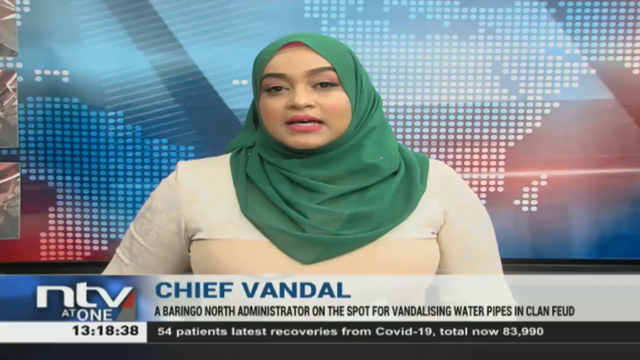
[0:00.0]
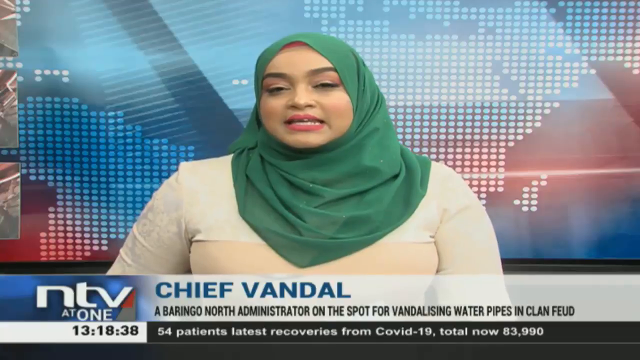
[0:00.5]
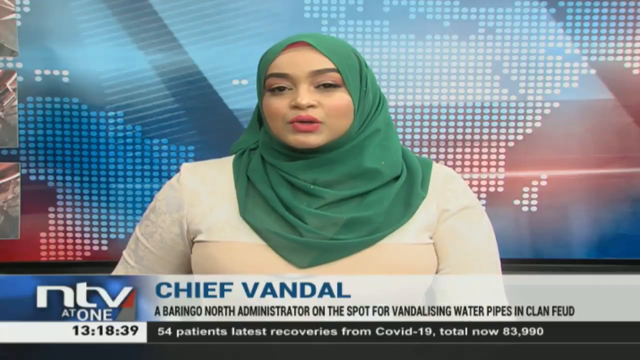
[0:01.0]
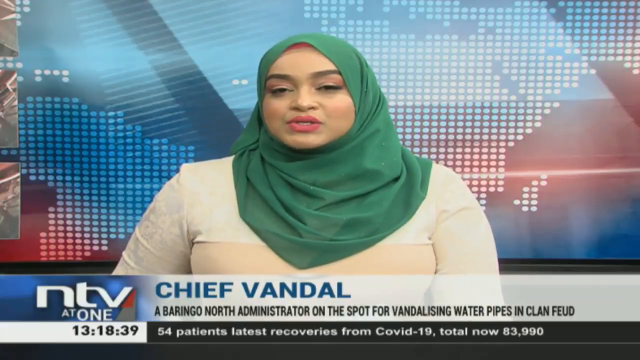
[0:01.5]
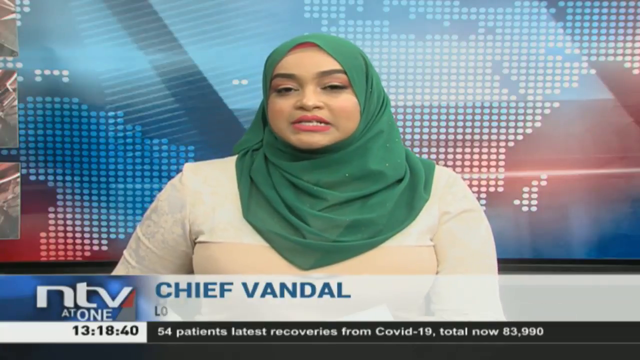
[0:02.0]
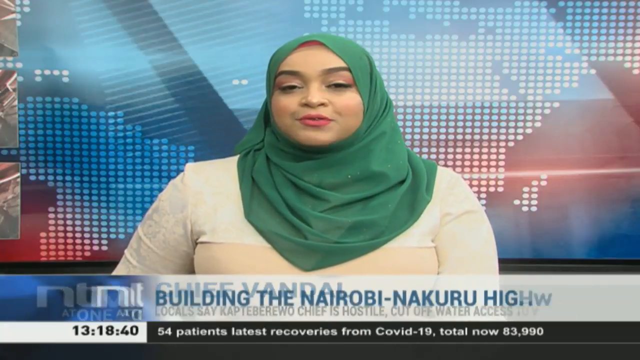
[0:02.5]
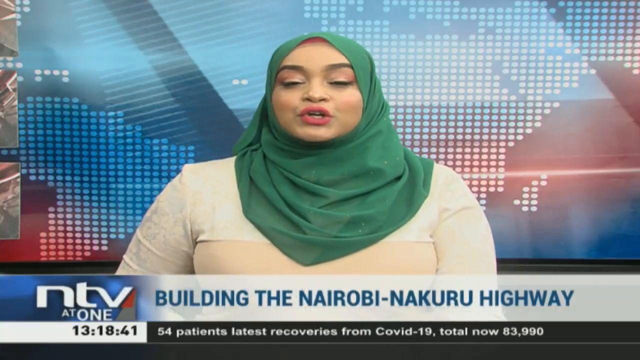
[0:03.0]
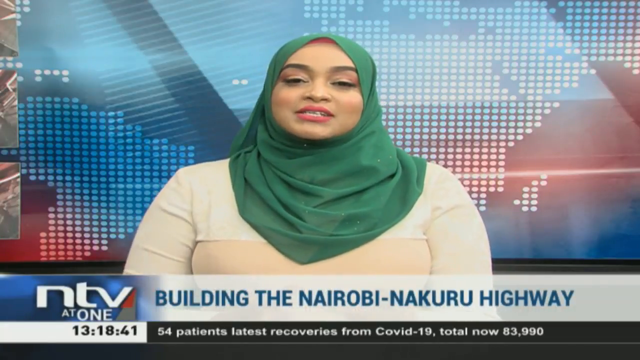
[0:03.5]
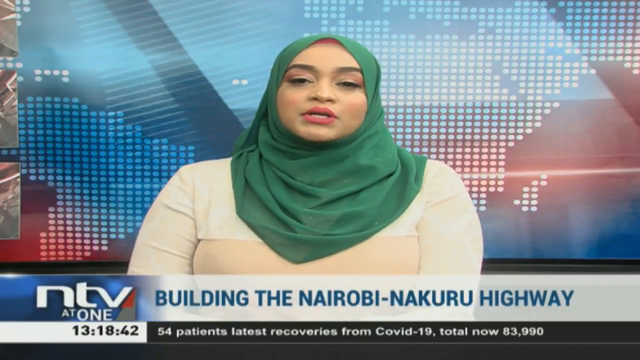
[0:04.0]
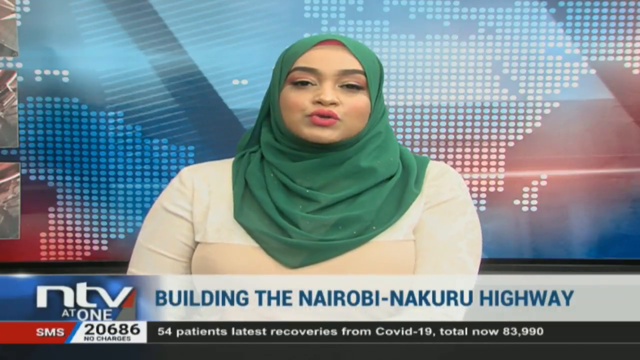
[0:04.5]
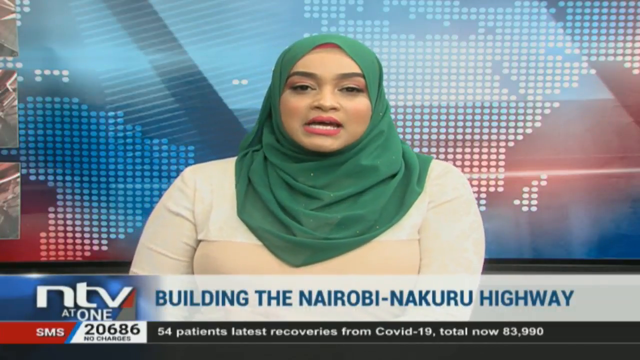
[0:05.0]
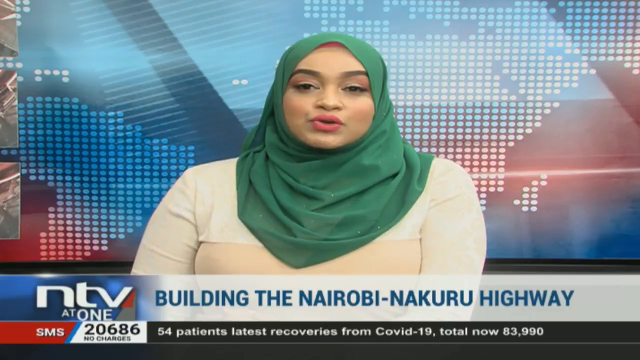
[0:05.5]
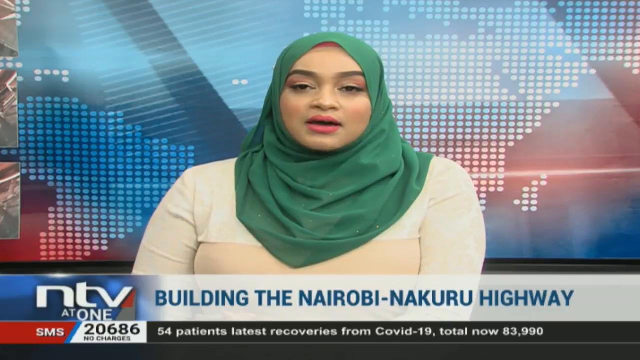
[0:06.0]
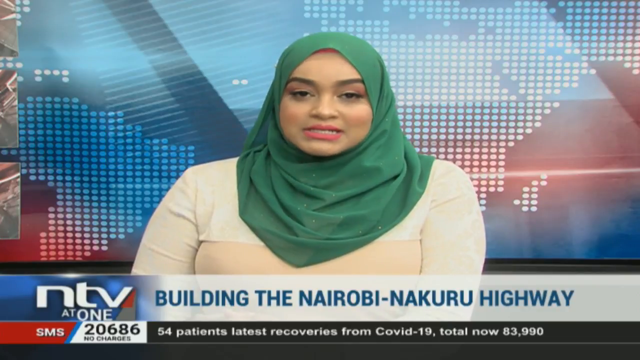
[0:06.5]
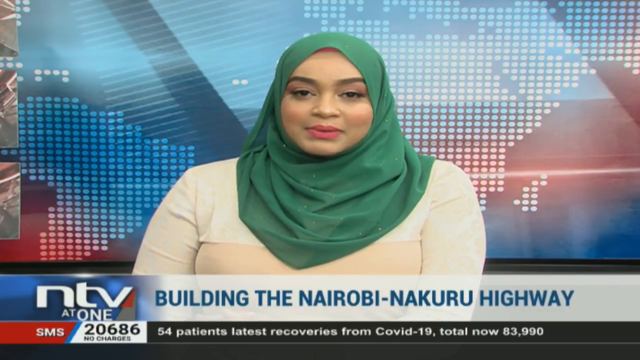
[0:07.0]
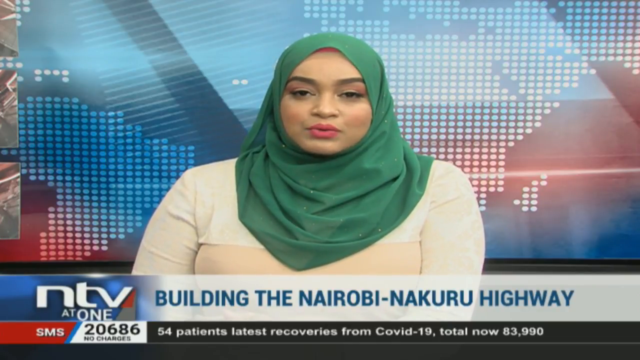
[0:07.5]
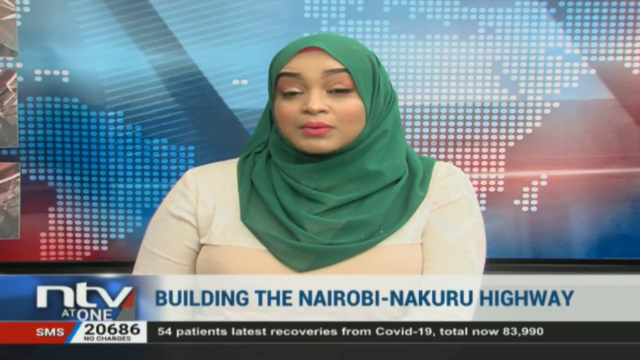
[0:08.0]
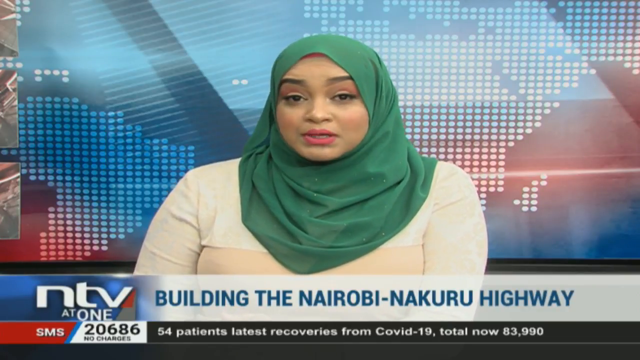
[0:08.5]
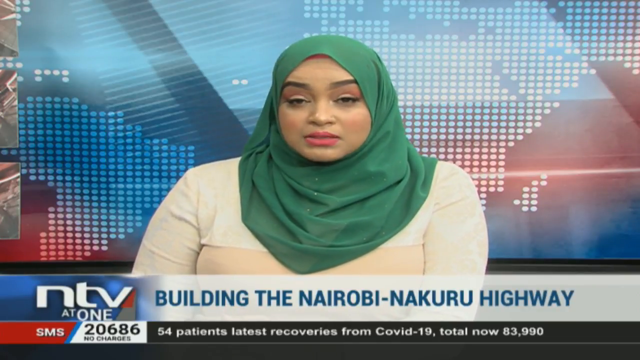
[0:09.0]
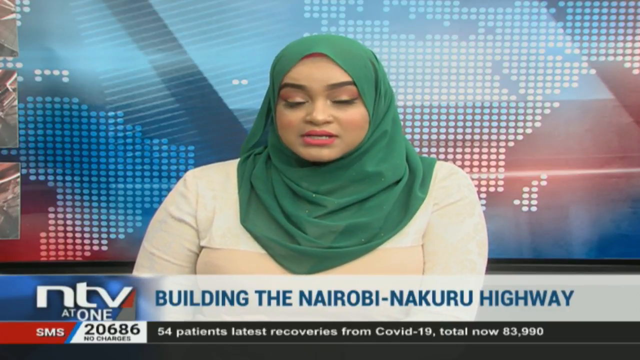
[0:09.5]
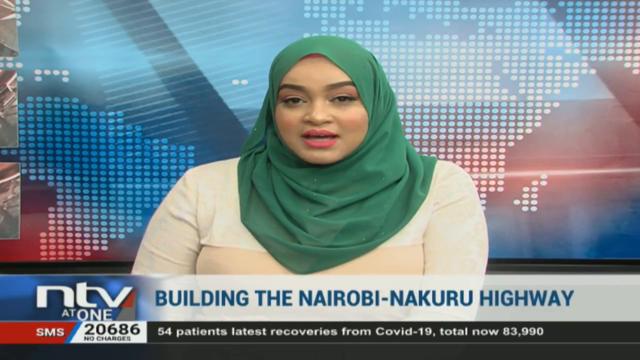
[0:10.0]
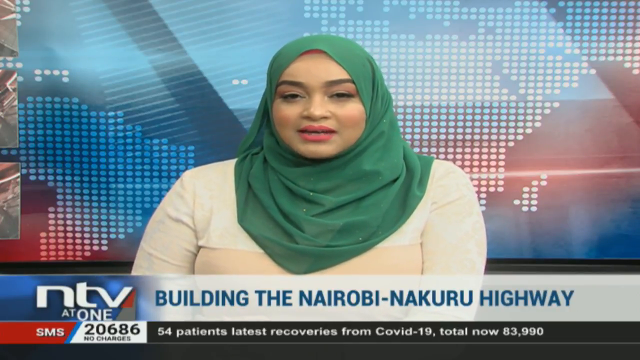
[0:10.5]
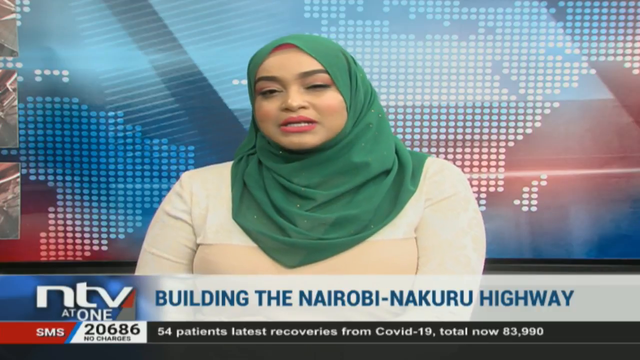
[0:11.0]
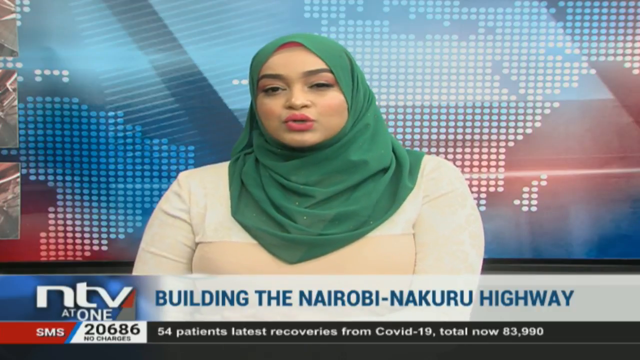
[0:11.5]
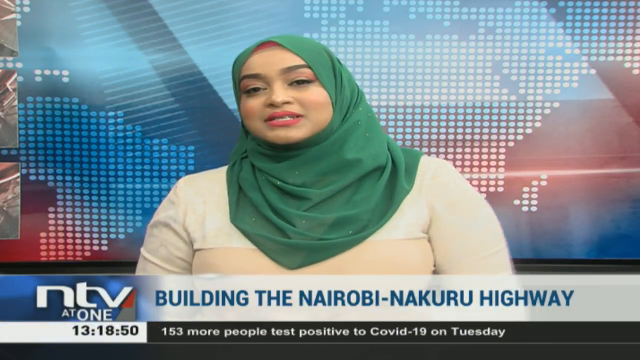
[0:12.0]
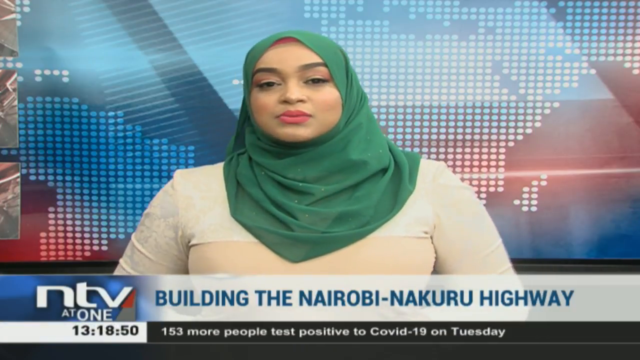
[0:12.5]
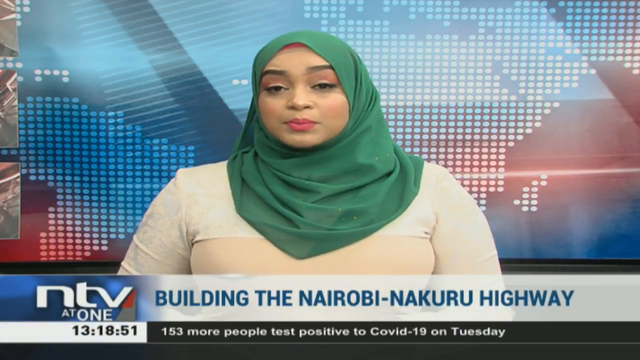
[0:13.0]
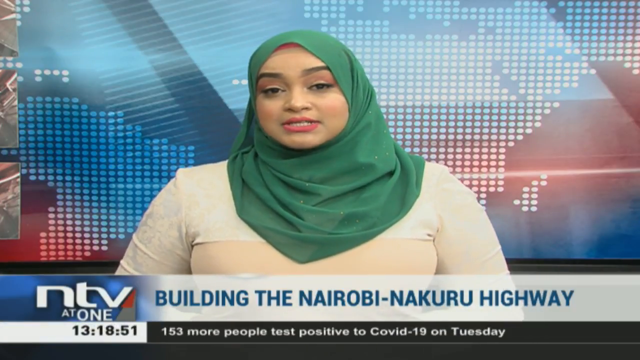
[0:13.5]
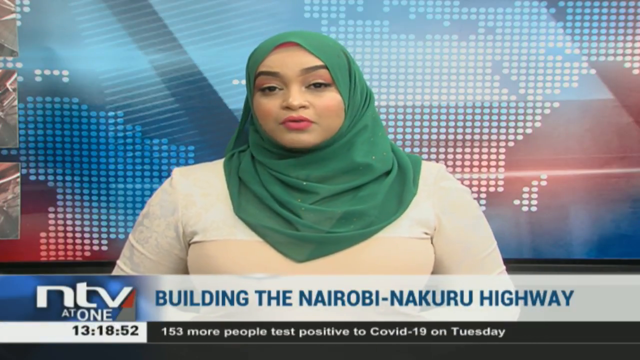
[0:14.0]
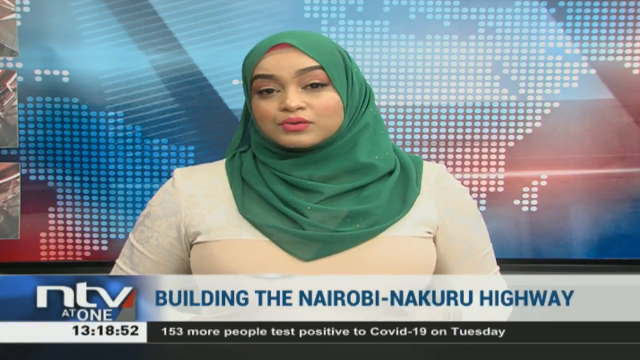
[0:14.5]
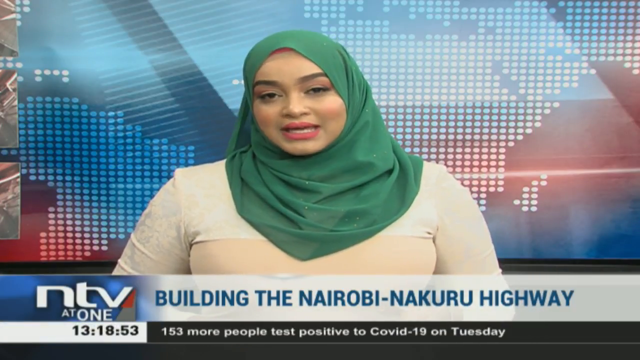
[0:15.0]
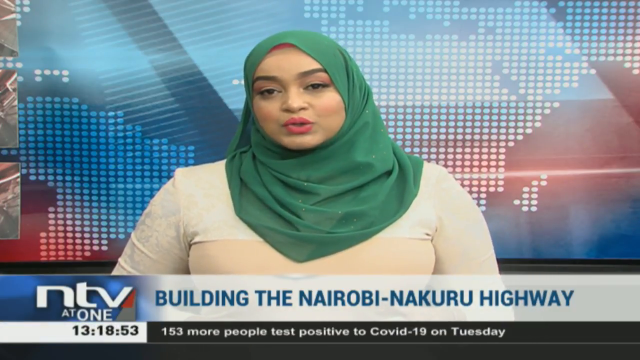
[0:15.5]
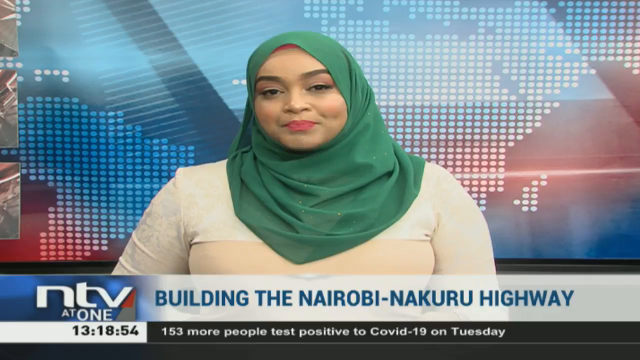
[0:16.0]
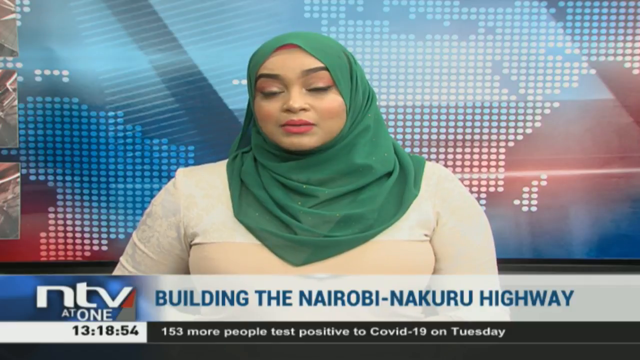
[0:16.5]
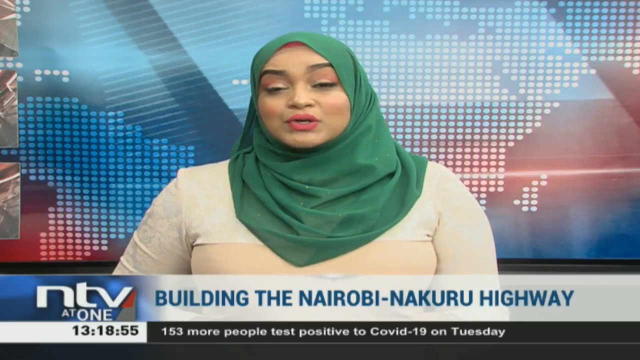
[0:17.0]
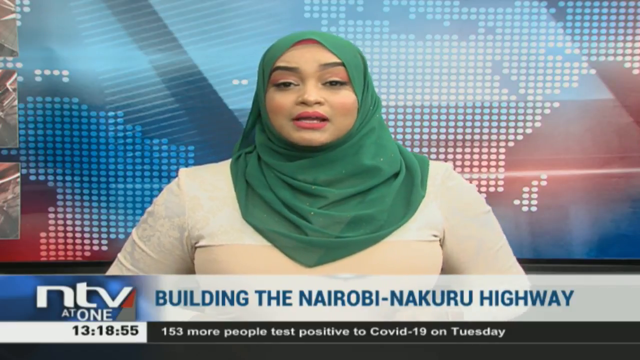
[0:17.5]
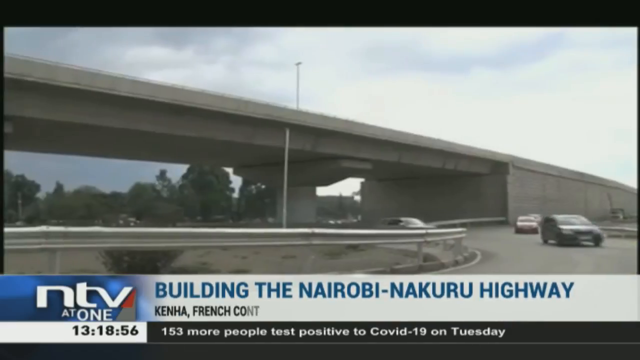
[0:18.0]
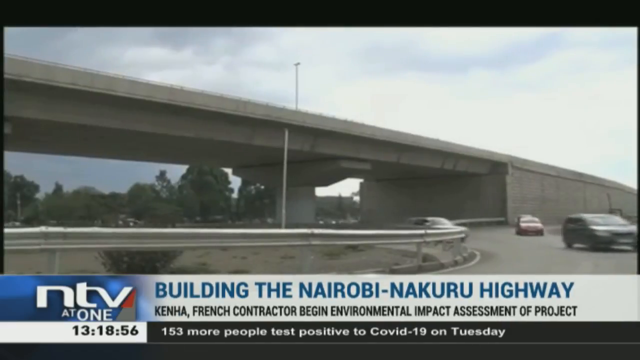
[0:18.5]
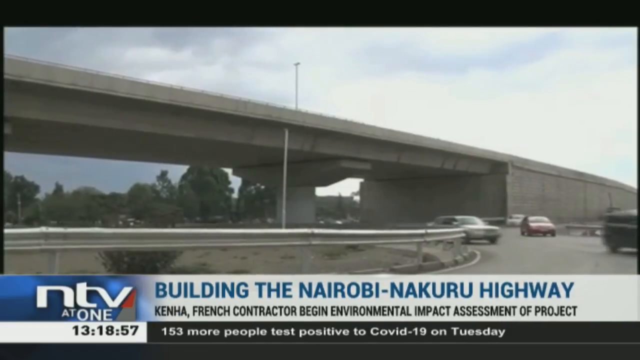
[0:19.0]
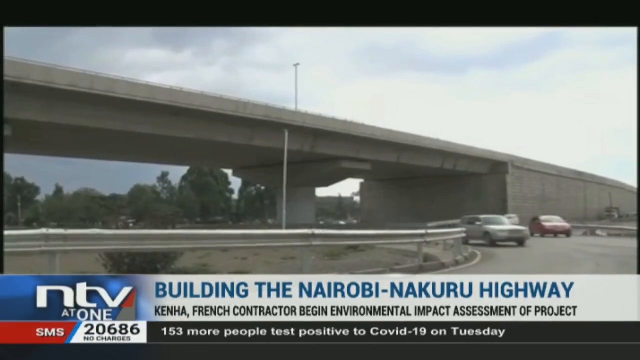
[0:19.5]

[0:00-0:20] A woman on screen wears a green scarf, a long-sleeved beige shirt and red lipstick. Below her are the words "Chief Vandal," and below that the text reads "Baringo North Administrator on the spot for vandalizing water pipes." Below that it says "54 patients, latest recoveries from COVID-19, now 83,990." The text "Building the Nairobi Nakuru Highway" then appears above, and images show a busy, sort of interstate off-ramp. The time during the newscast reads 13:18:38. Behind the woman are sort of stylized landmasses indicating various continents. To the left is information identifying the station, which seems to be NTV, with "at one" below it. The images of the interstate are in muted colors, almost black and white, though there is some faded blue, such as the blue sky.